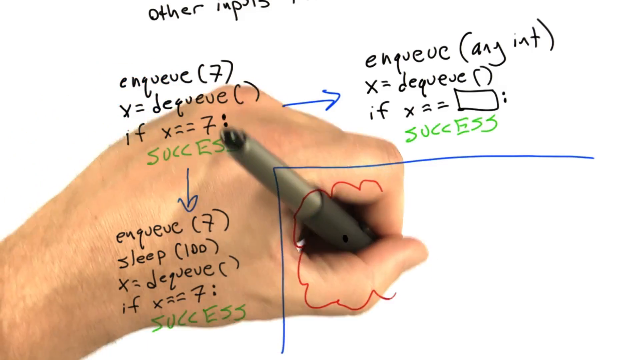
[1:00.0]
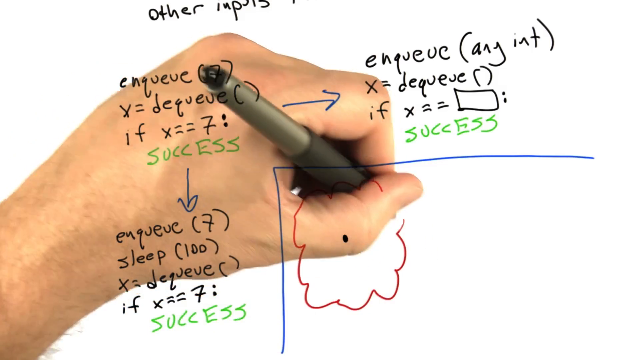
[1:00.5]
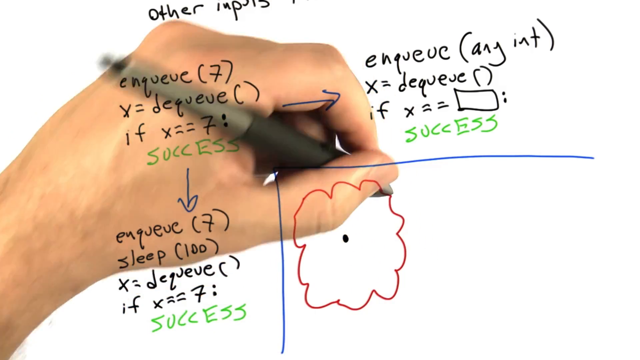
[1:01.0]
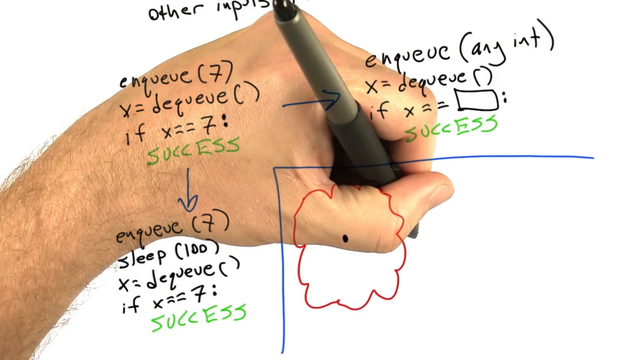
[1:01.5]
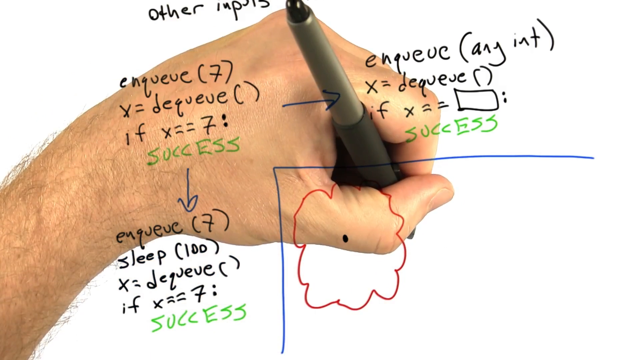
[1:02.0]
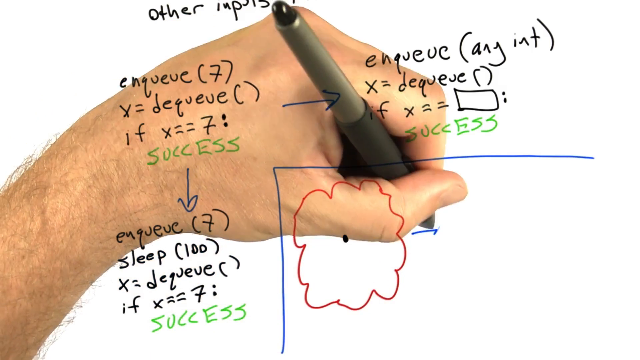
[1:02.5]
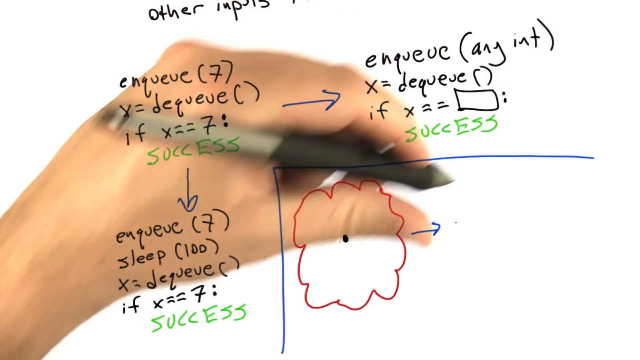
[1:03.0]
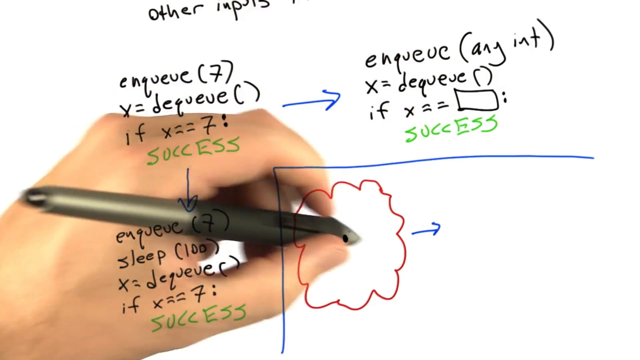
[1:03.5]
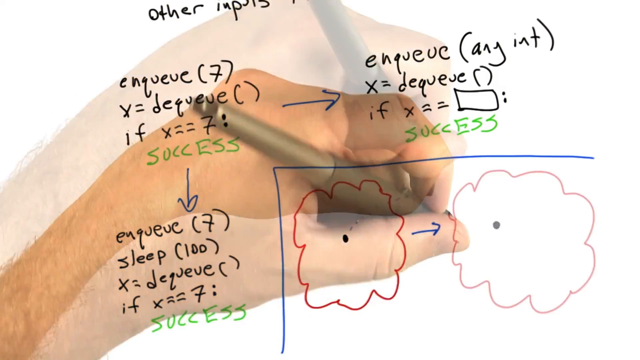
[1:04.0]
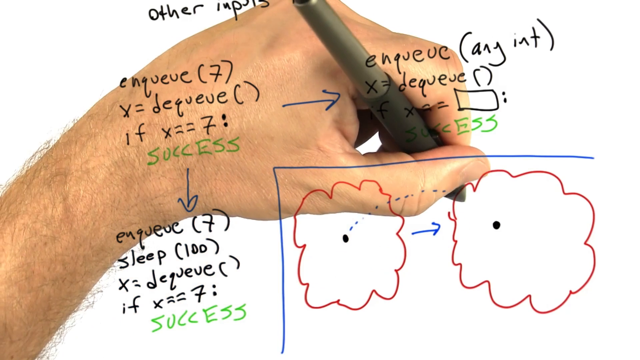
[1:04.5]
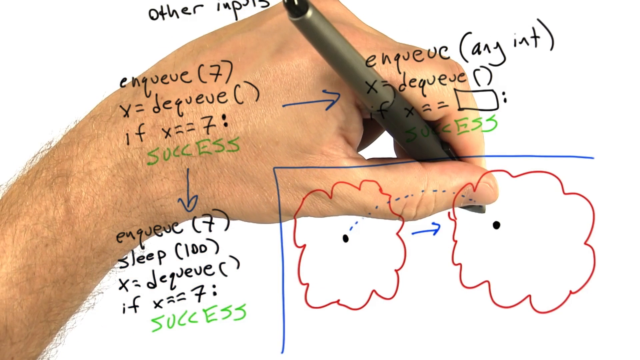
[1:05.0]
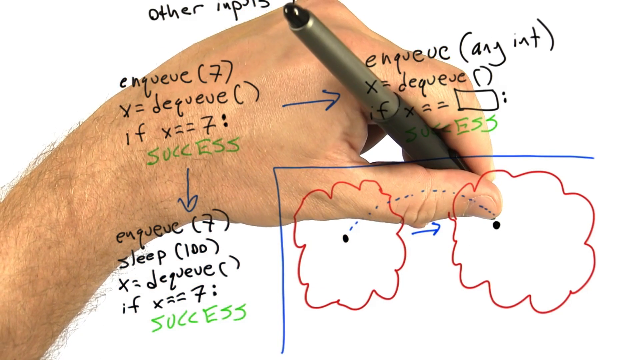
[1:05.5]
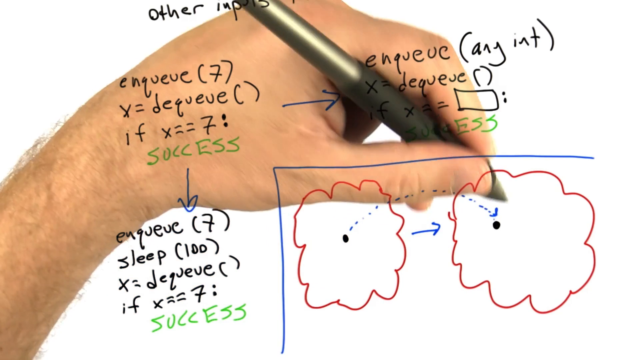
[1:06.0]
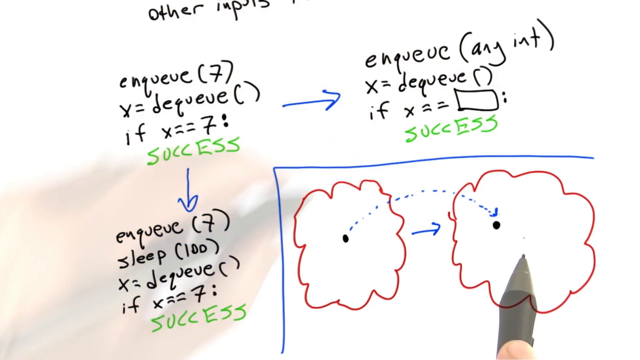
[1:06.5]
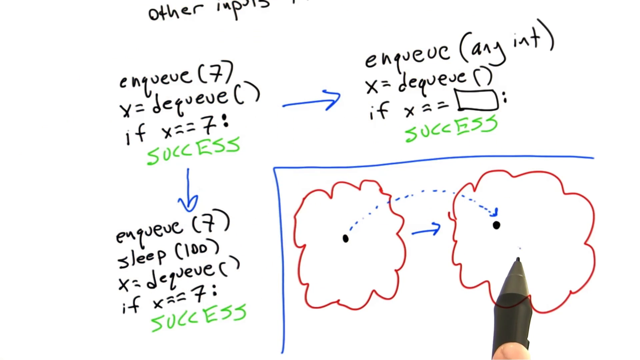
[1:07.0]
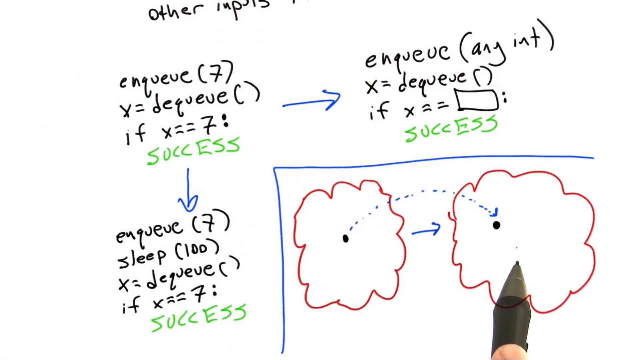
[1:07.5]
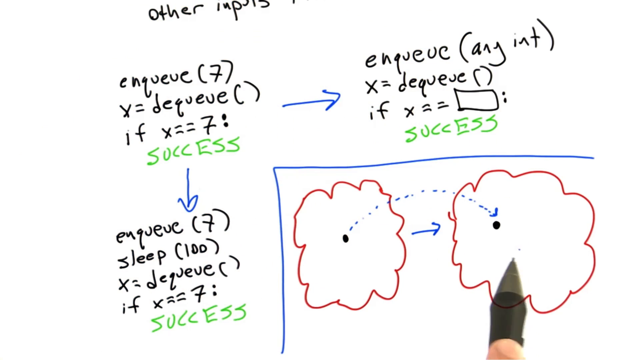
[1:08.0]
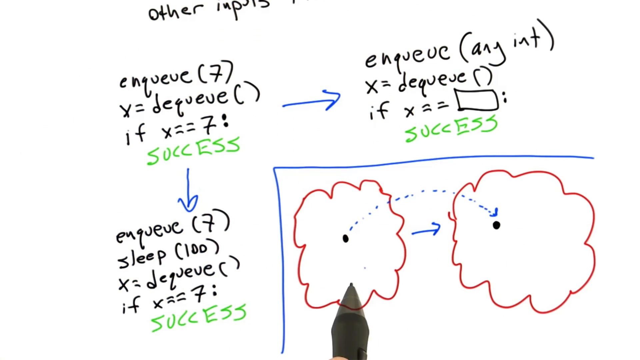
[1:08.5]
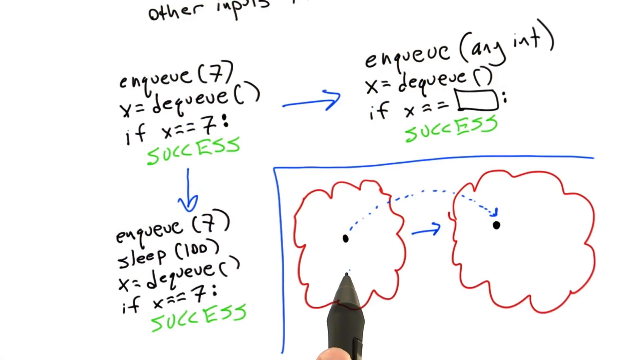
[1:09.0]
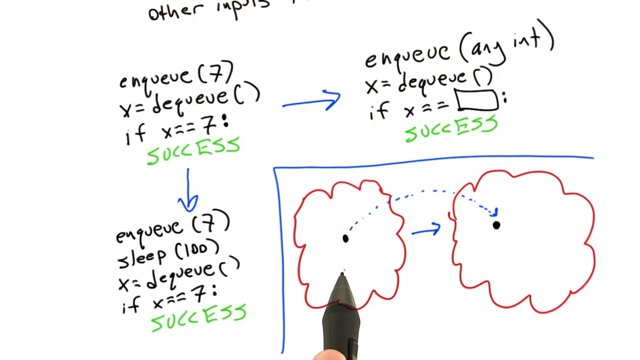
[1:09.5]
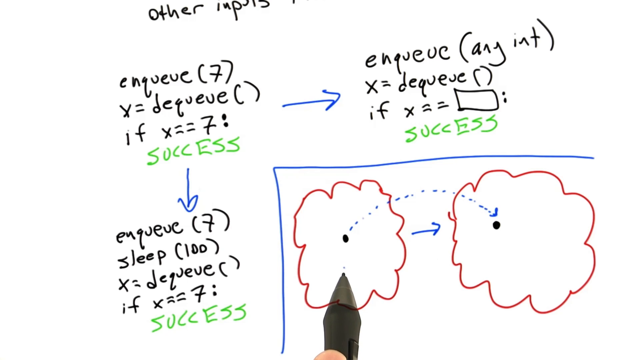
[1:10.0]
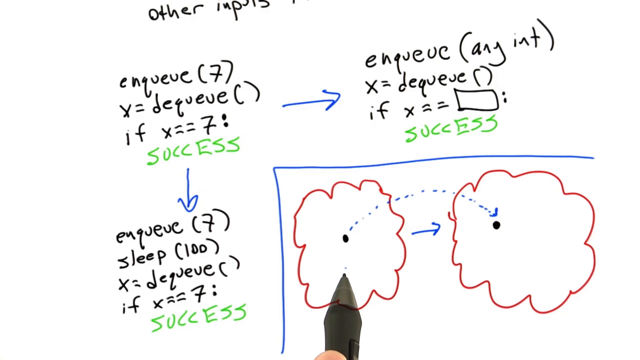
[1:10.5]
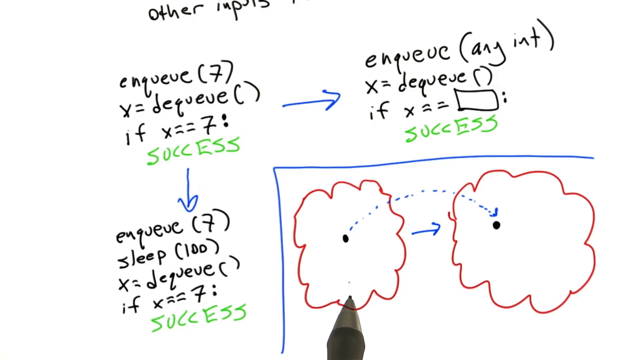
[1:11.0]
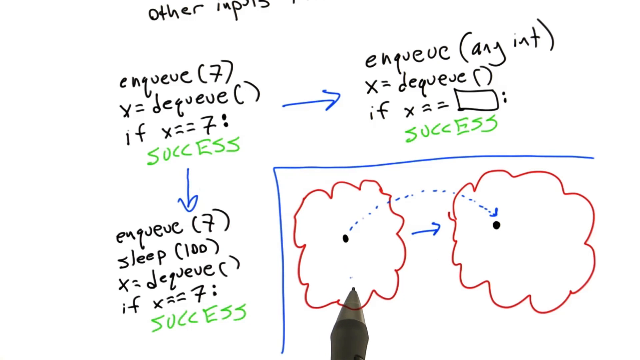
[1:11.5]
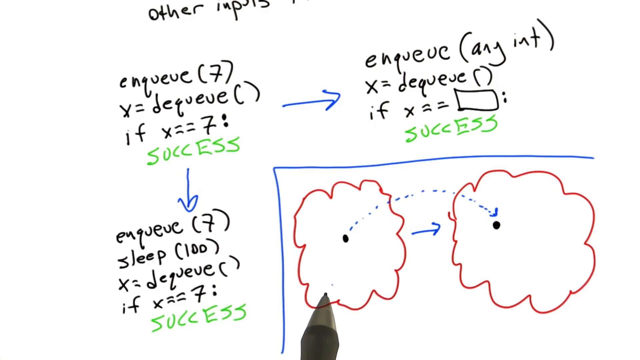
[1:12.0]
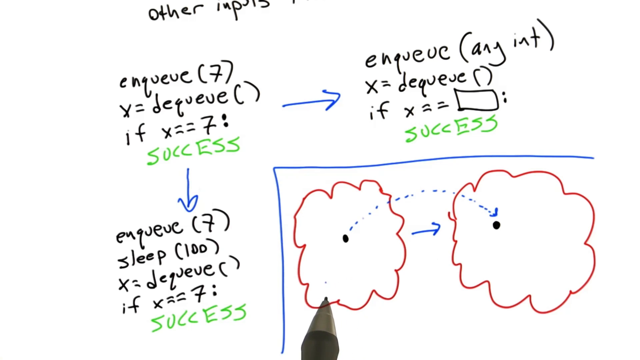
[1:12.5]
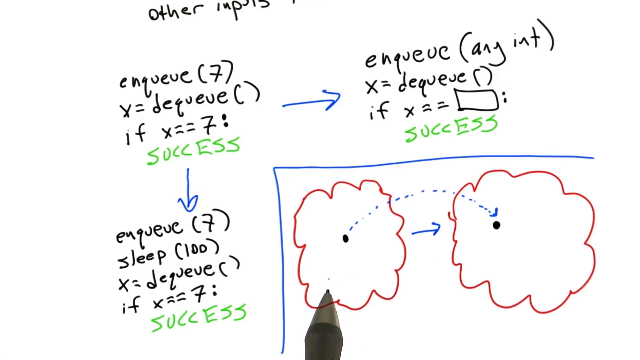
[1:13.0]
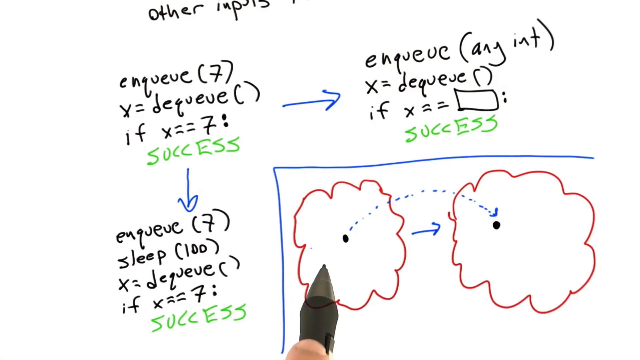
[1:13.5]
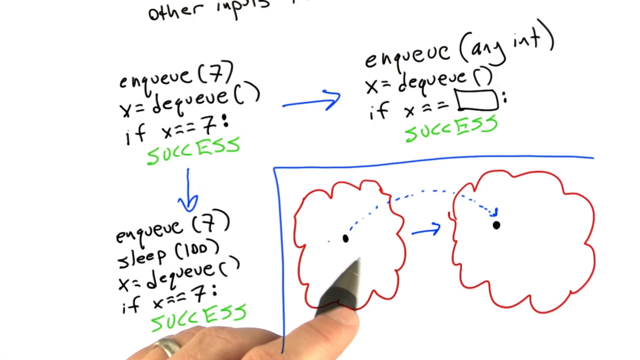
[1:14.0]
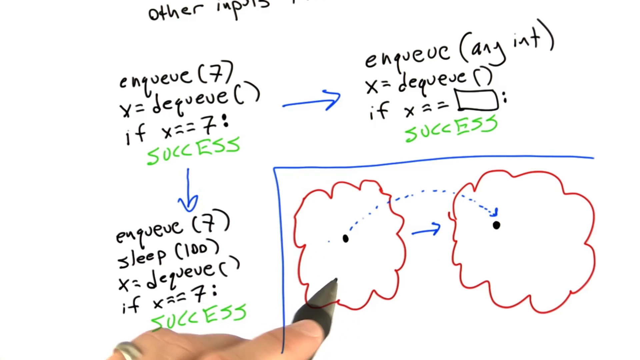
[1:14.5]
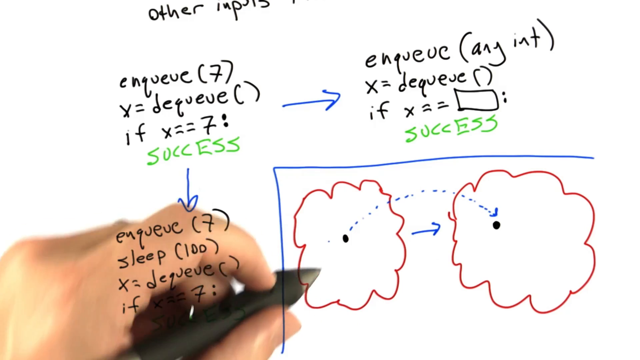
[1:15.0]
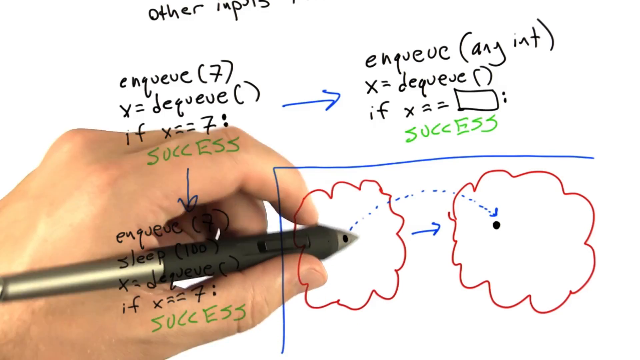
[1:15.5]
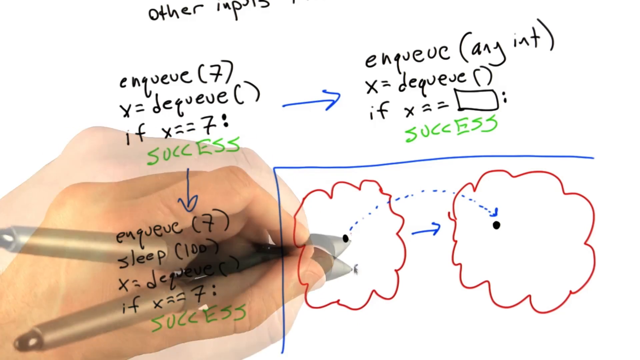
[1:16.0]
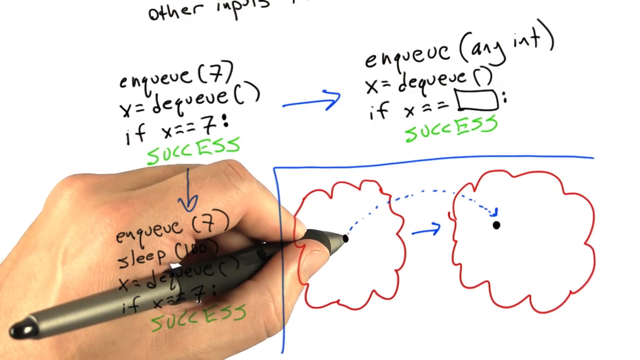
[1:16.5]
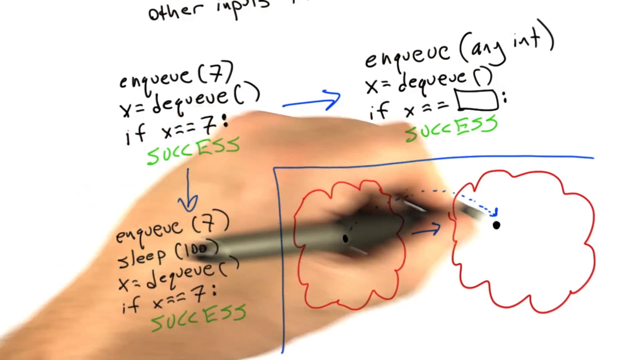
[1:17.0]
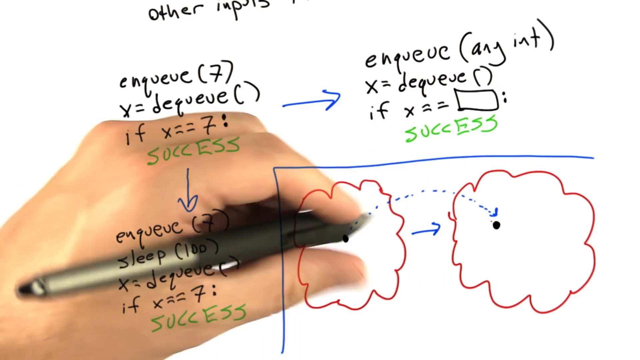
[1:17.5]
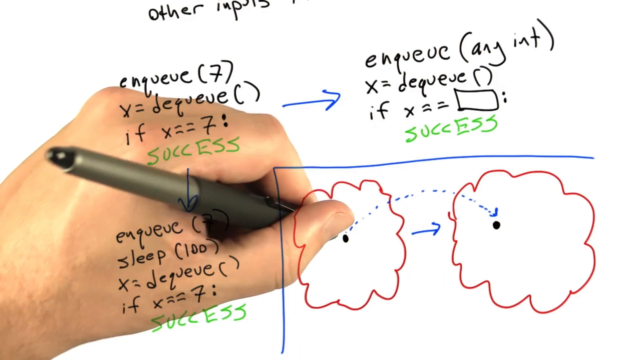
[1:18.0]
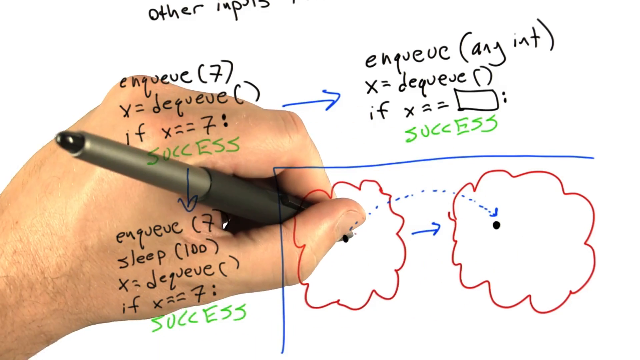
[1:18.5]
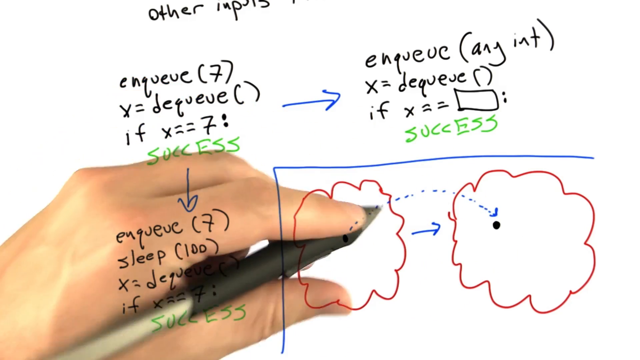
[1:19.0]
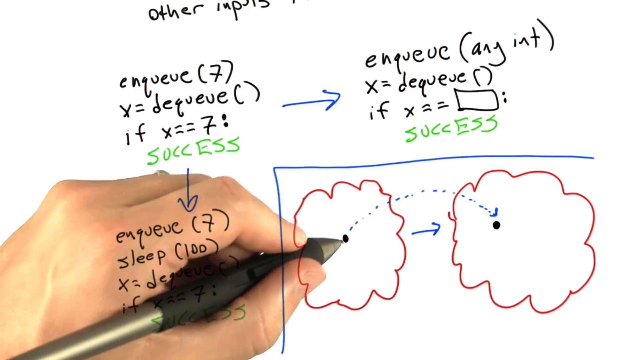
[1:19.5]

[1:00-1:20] The person finishes drawing the cloud around the first dot and moves the hand next to it; suddenly another pink cloud appears with another dot in it, and a blue arrow appears between the two. The person then draws a dotted arrow from the first dot to the second dot, moves back to the first cloud, and indicates the dotted arrow. The person seems to be describing the correlation between the two dots in the pink clouds. The hand moves from one cloud to the other, following the dotted arrow. The full pen comes into view: it has a black bottom and a gray top, and it appears to be a marker shaped like a pen.